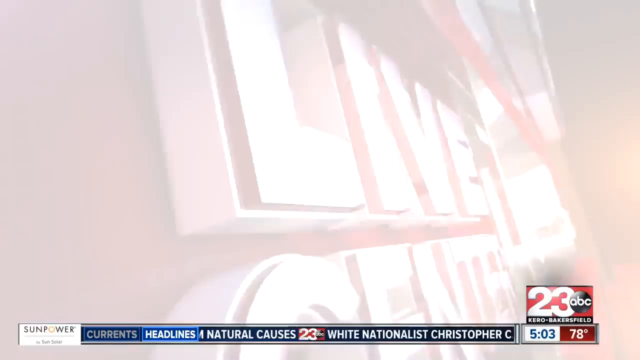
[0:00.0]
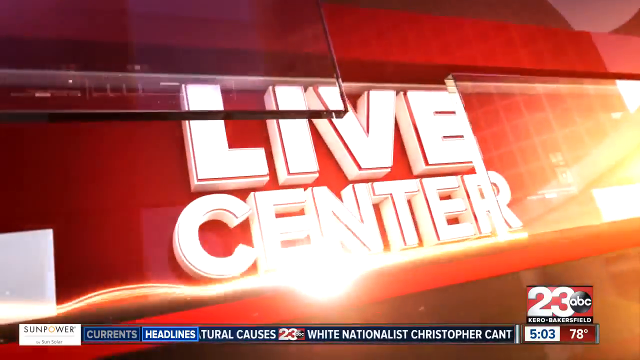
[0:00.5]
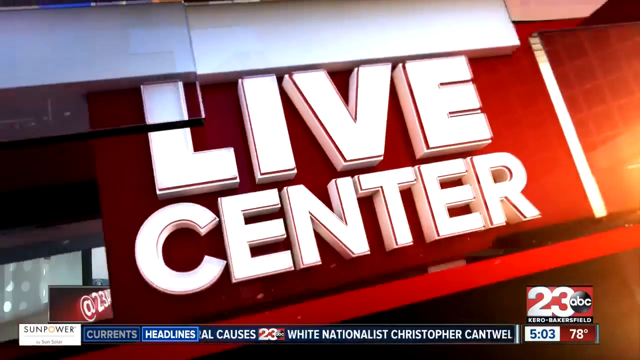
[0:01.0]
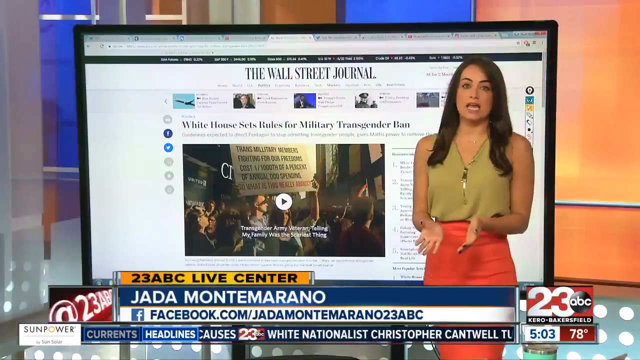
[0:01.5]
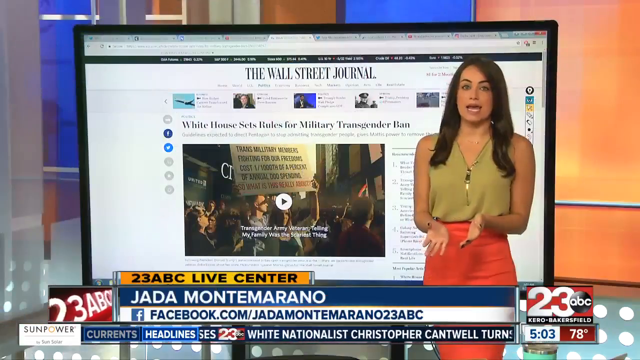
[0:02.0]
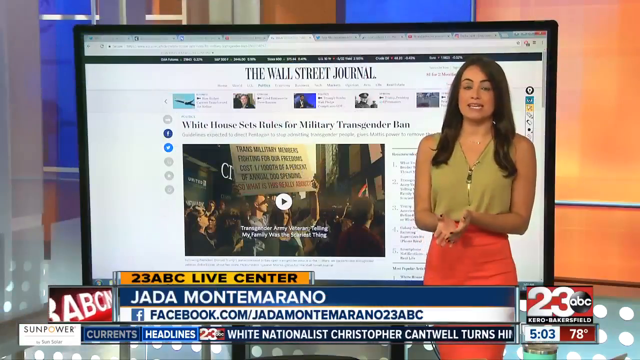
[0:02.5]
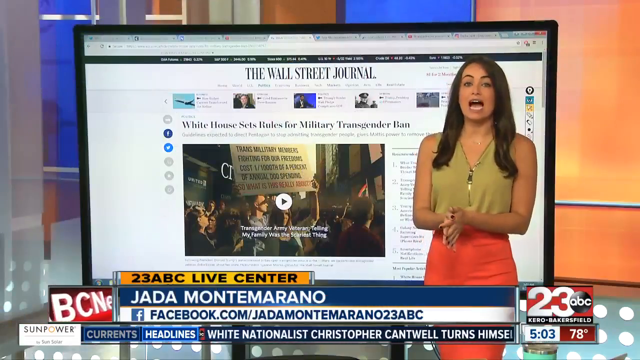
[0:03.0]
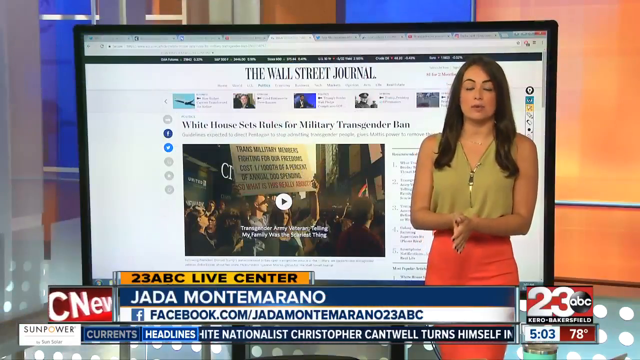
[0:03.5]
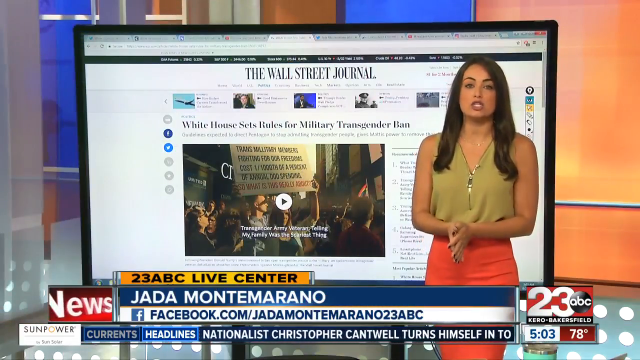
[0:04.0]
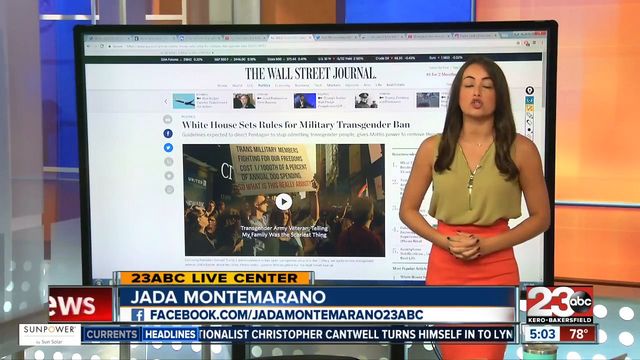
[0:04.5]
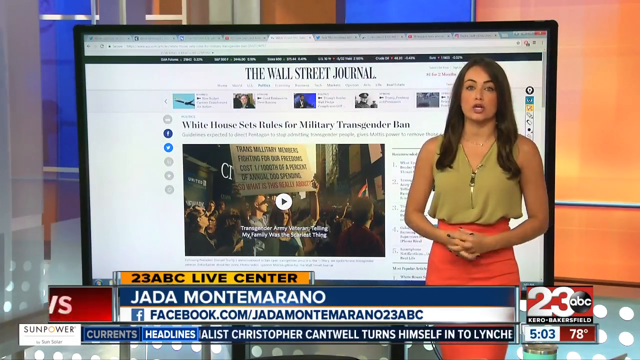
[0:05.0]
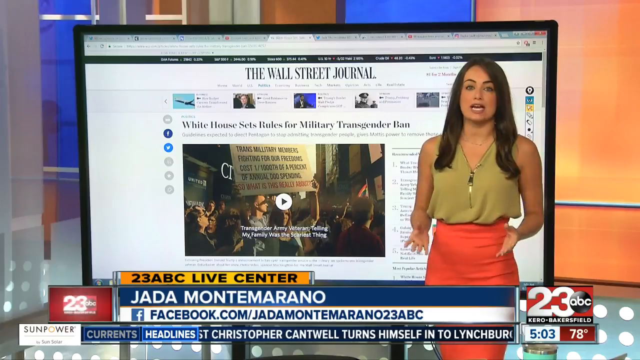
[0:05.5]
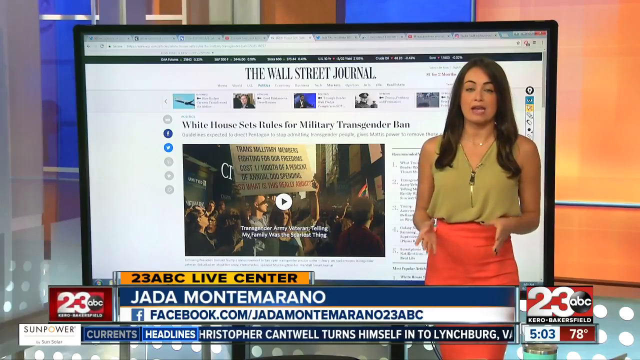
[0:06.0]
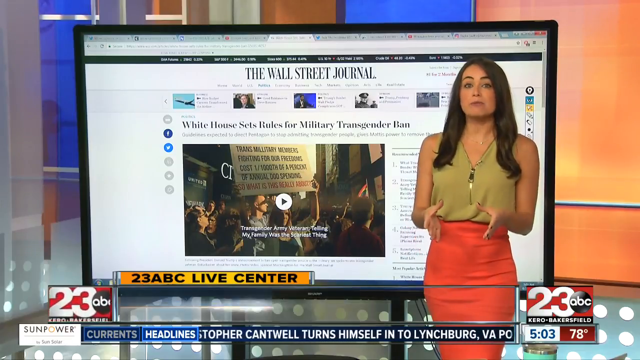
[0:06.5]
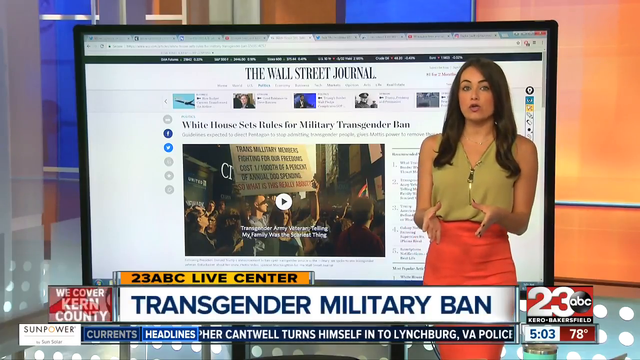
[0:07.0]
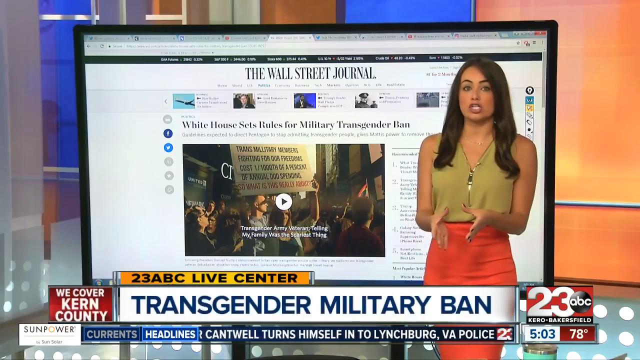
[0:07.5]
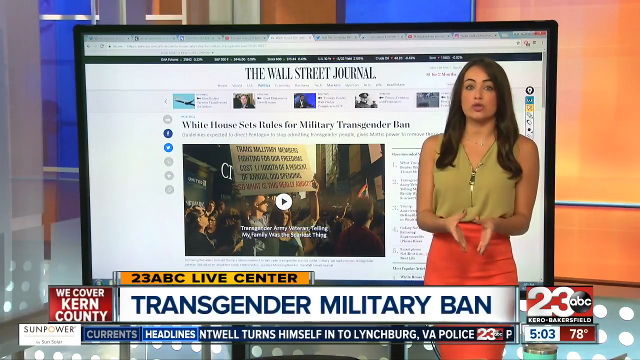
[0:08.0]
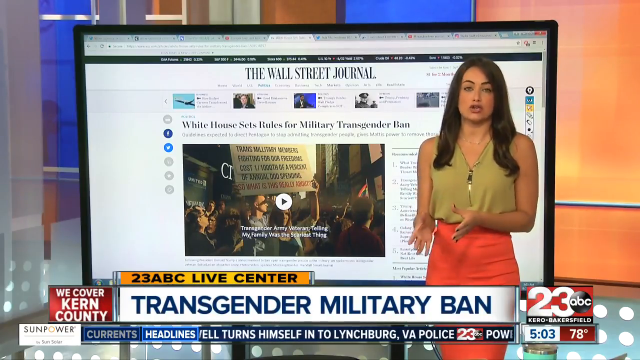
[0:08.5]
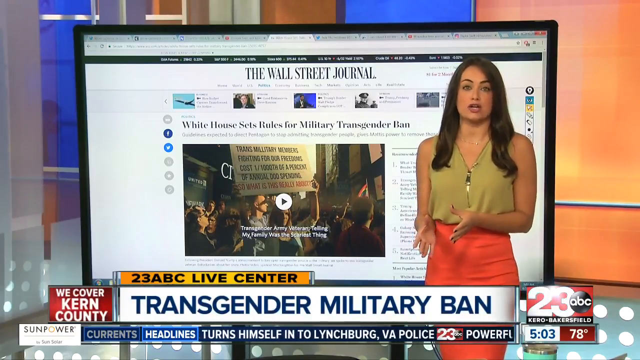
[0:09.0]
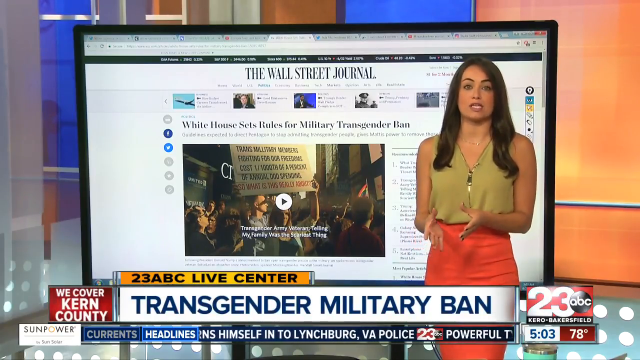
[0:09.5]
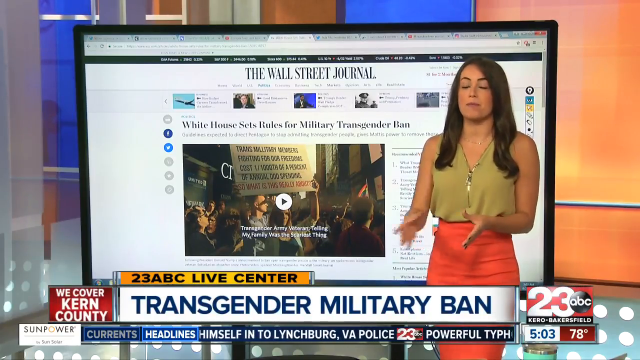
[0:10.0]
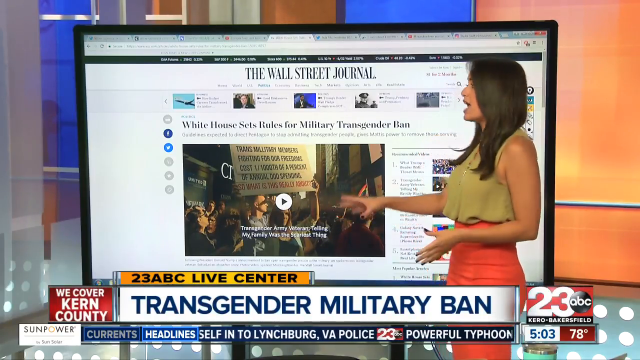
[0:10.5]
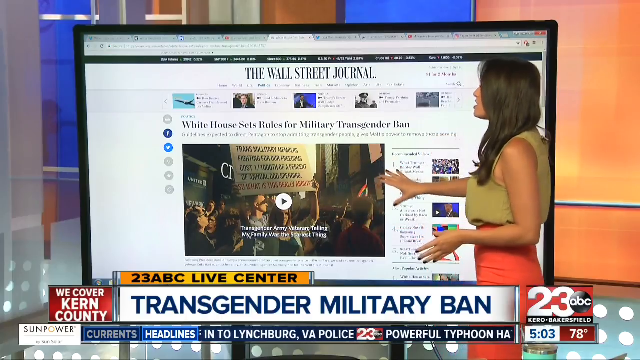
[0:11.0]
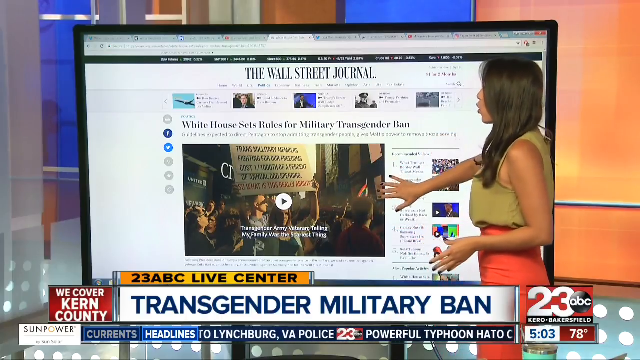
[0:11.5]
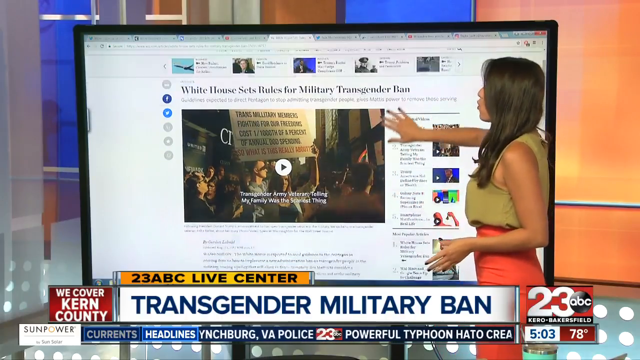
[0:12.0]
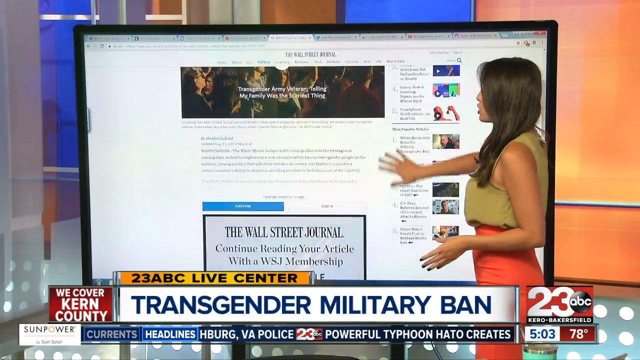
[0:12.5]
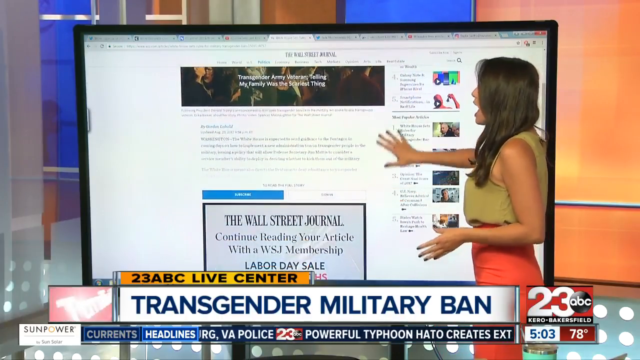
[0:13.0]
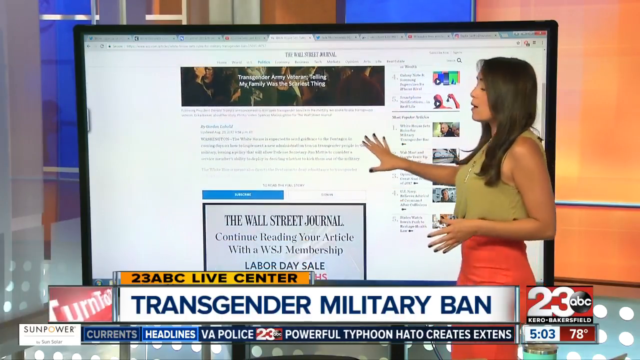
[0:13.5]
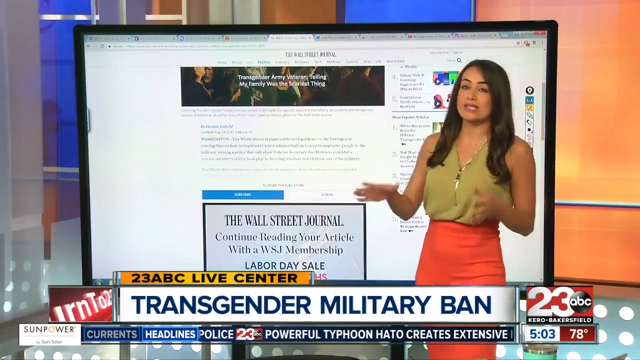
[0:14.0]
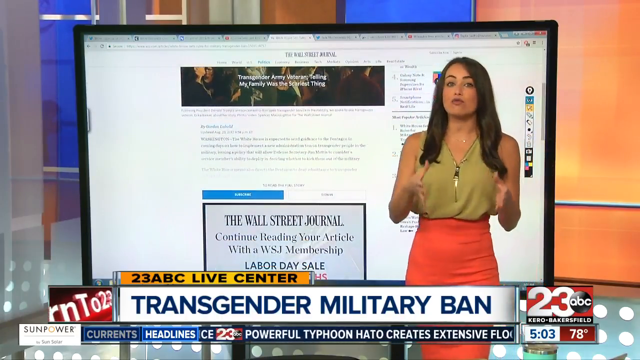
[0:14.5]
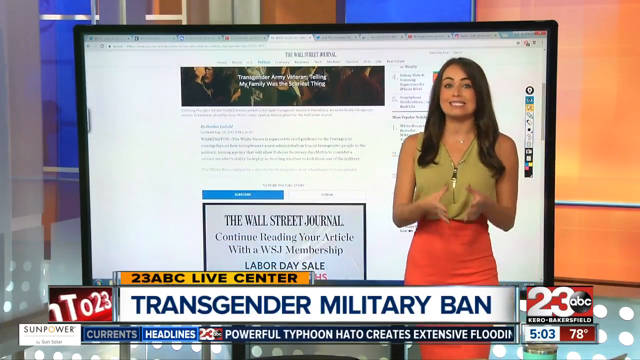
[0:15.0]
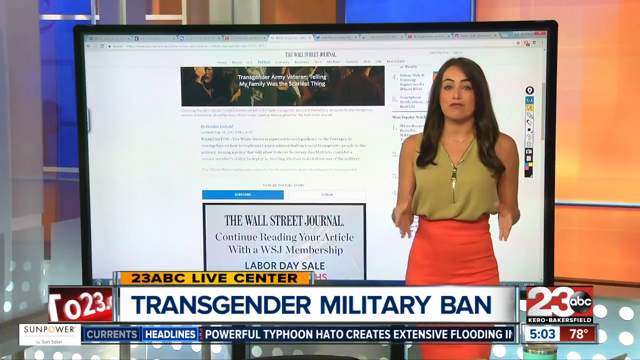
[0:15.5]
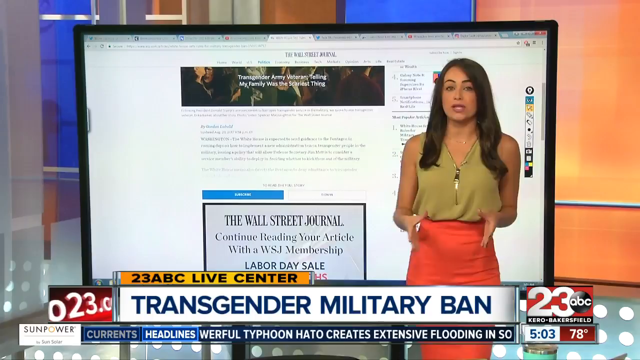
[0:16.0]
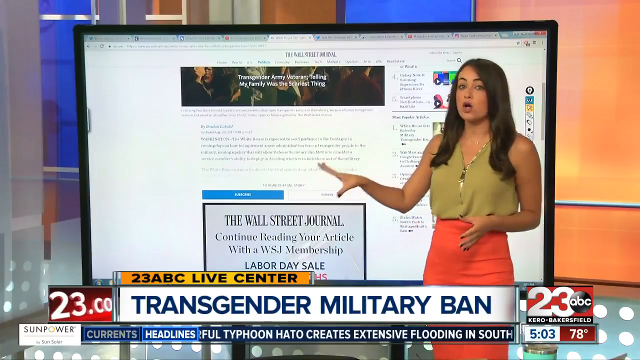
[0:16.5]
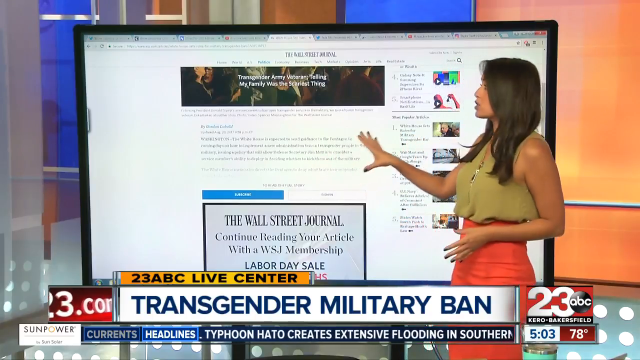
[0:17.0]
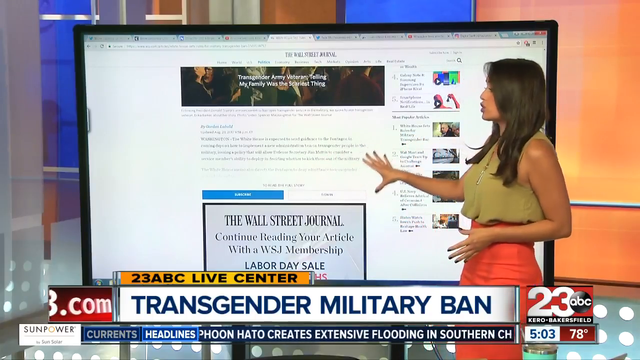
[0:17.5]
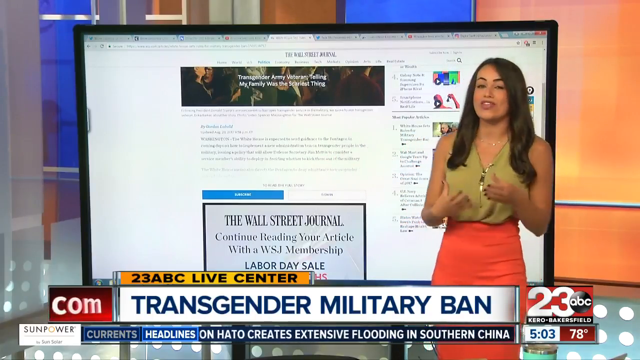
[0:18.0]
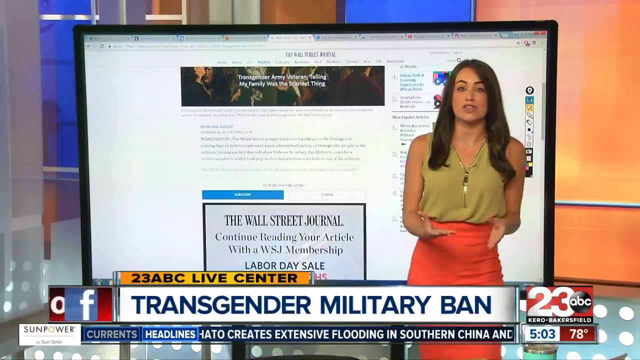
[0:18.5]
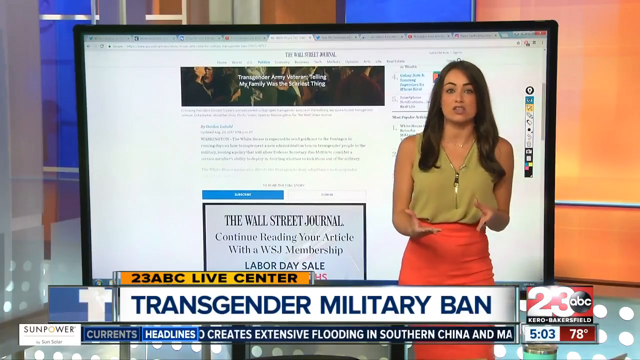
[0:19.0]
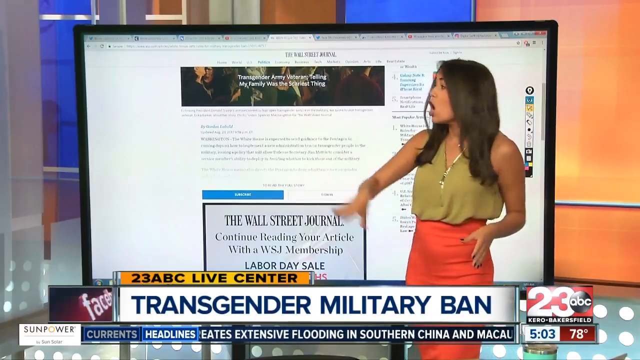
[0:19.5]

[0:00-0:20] In a news studio, a female reporter wears a sleeveless green top with an orange skirt and has long hair. Behind her, a screen shows a video of an event, probably the story she is reporting on. On-screen text names the presenter as Jada Montarino. She gestures toward the events on the screen as she explains them, and the story concerns the transgender military ban. She scrolls through her screen as she continues explaining.